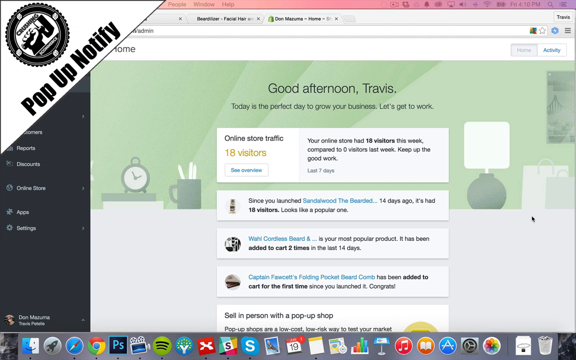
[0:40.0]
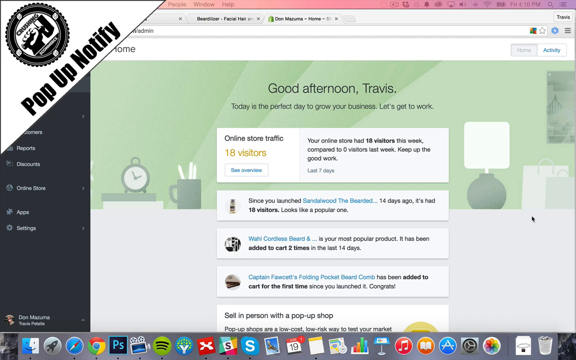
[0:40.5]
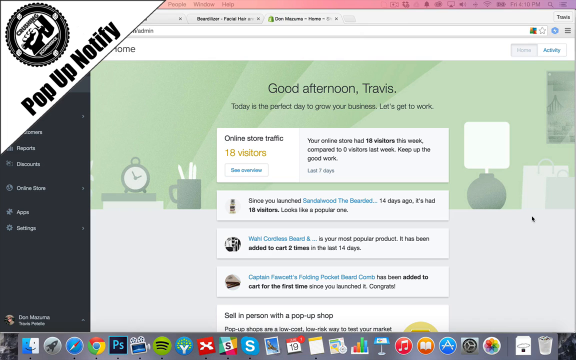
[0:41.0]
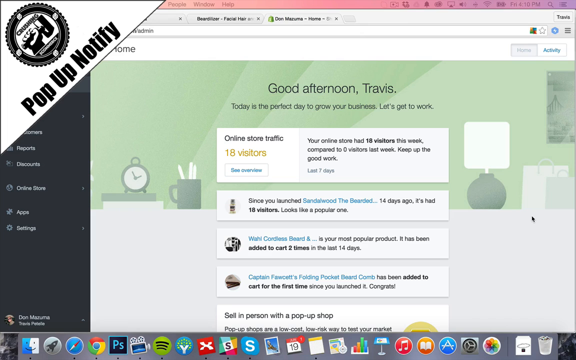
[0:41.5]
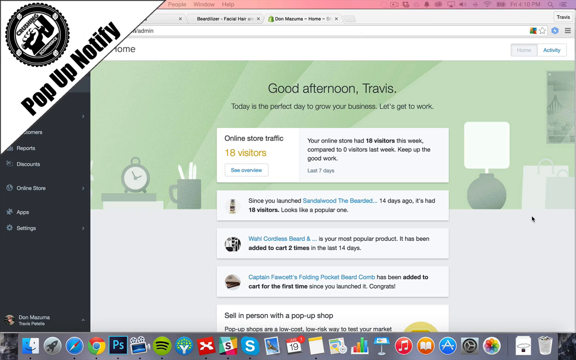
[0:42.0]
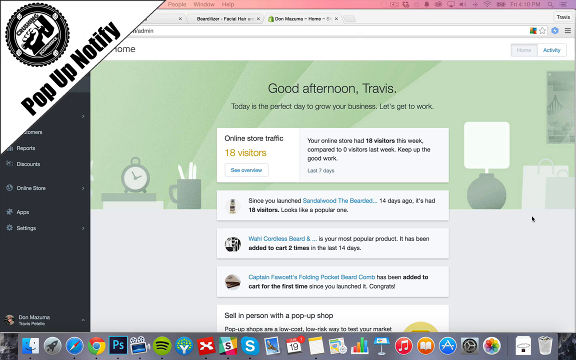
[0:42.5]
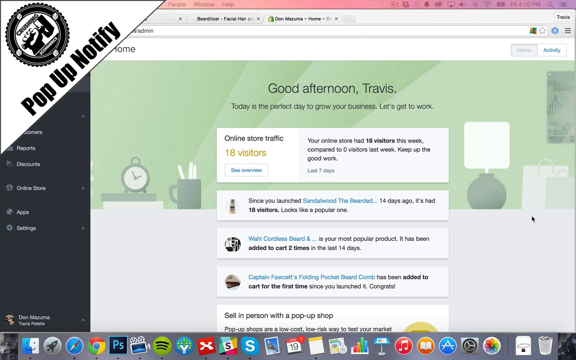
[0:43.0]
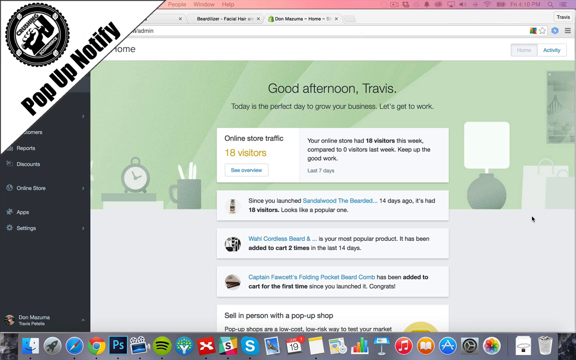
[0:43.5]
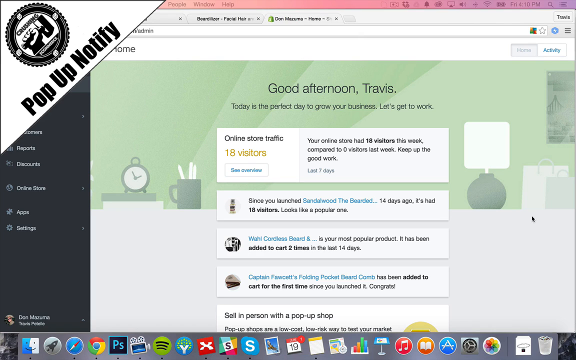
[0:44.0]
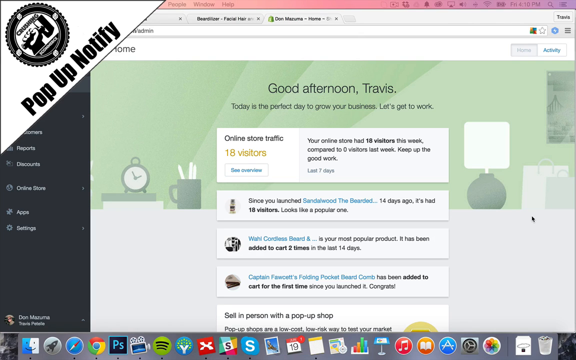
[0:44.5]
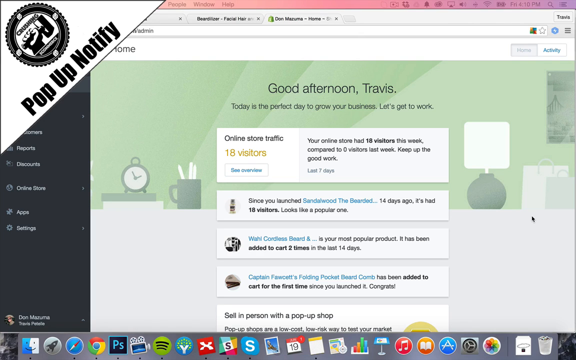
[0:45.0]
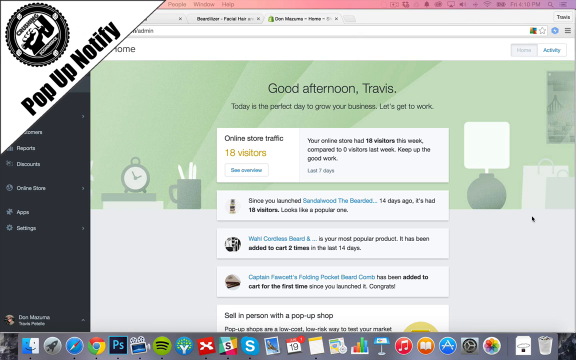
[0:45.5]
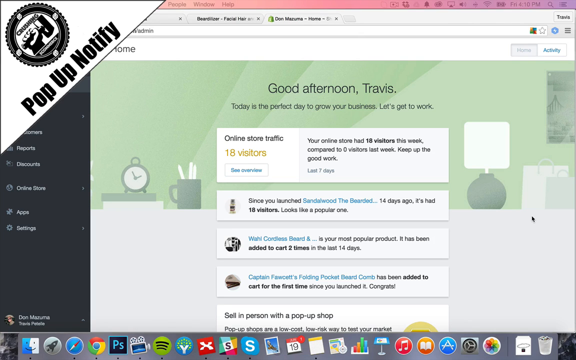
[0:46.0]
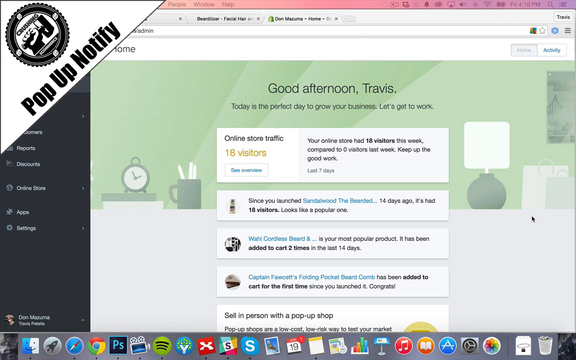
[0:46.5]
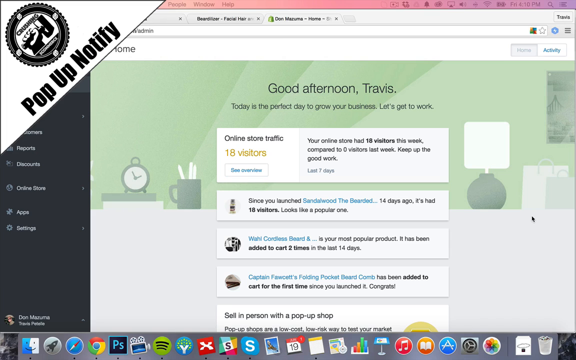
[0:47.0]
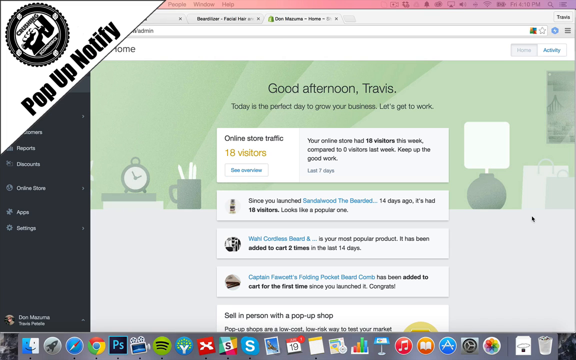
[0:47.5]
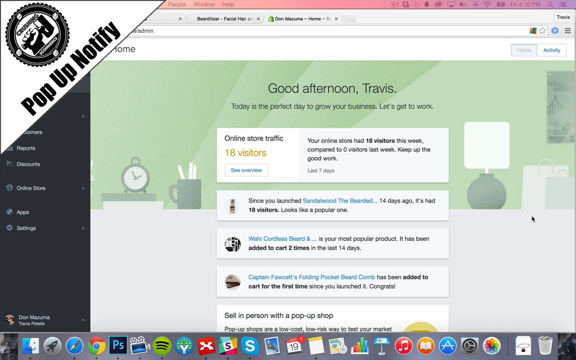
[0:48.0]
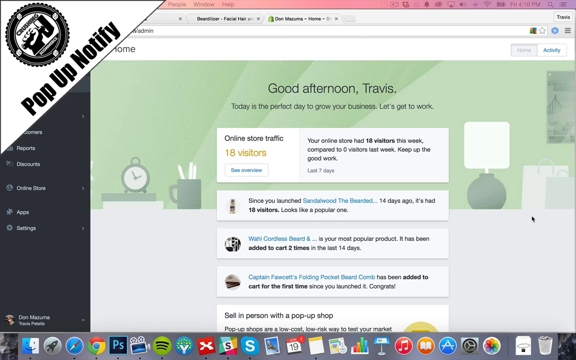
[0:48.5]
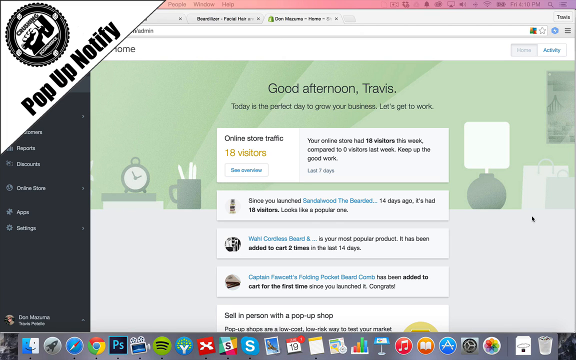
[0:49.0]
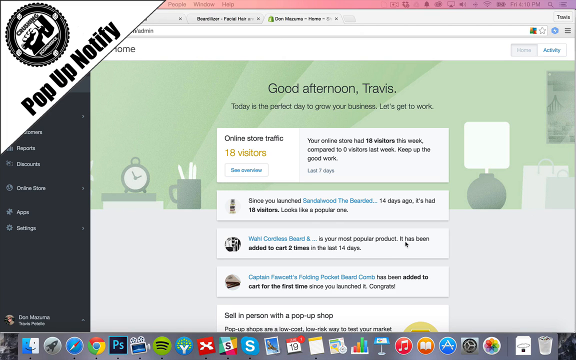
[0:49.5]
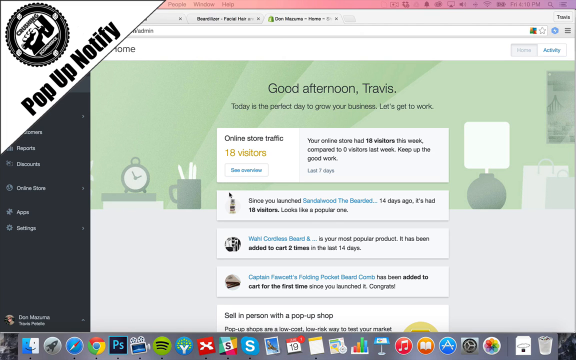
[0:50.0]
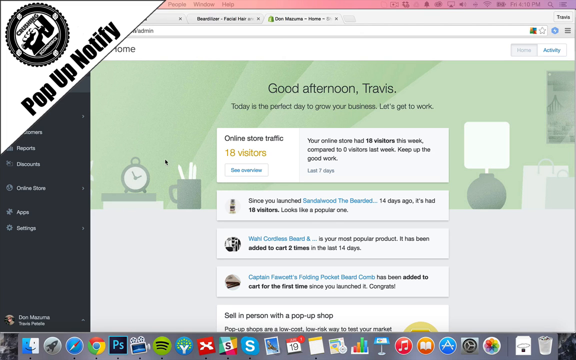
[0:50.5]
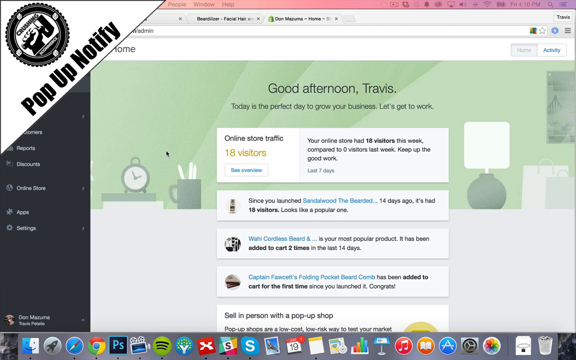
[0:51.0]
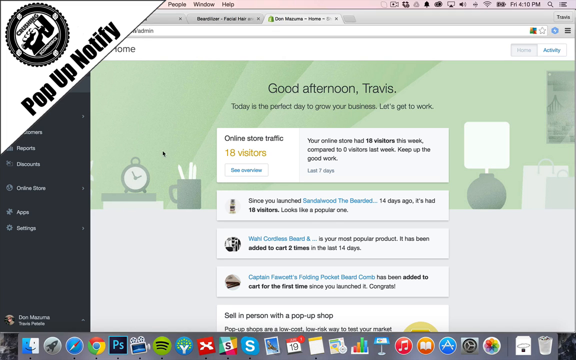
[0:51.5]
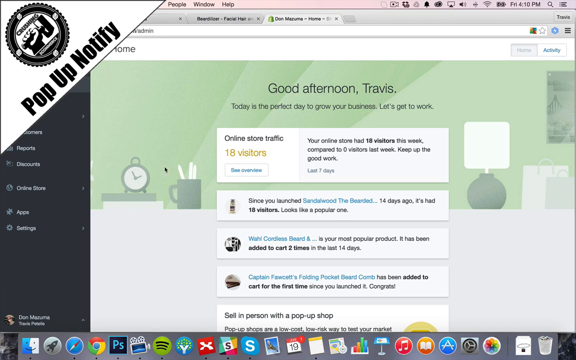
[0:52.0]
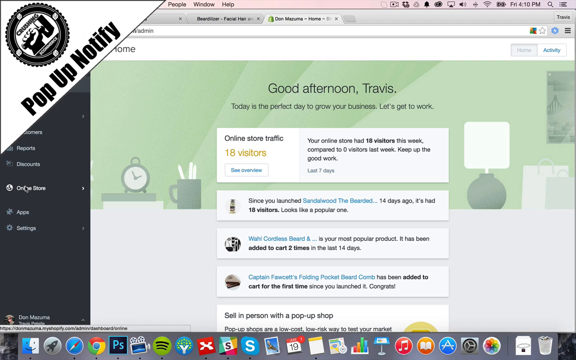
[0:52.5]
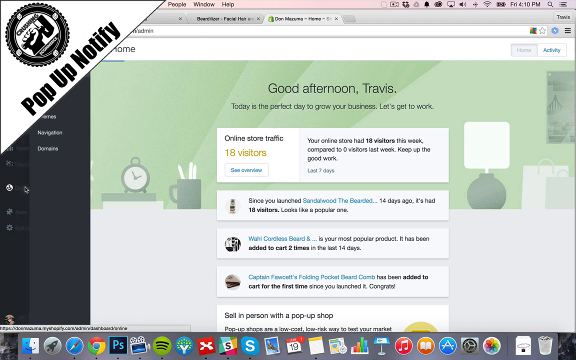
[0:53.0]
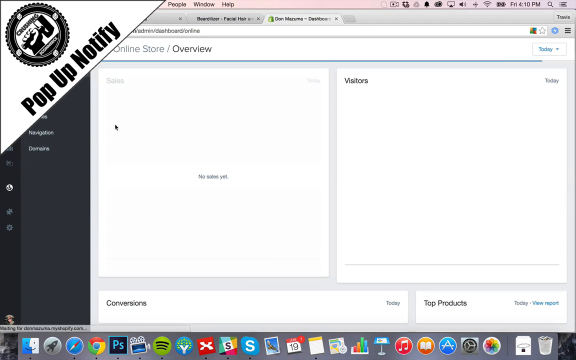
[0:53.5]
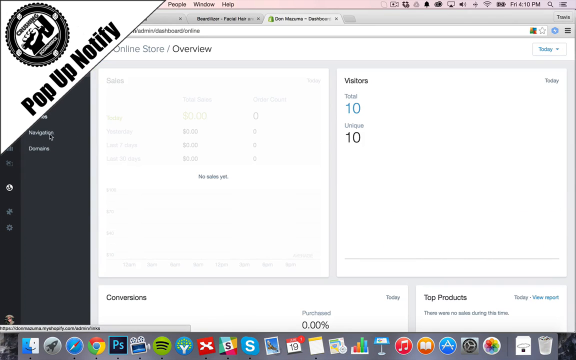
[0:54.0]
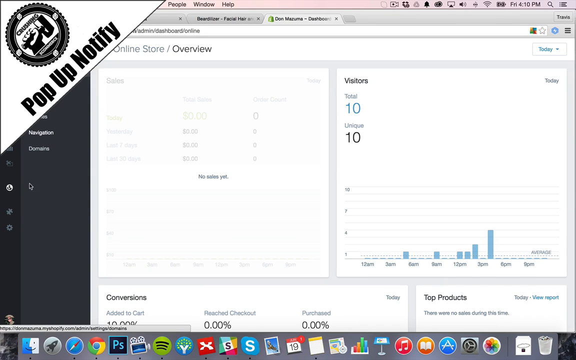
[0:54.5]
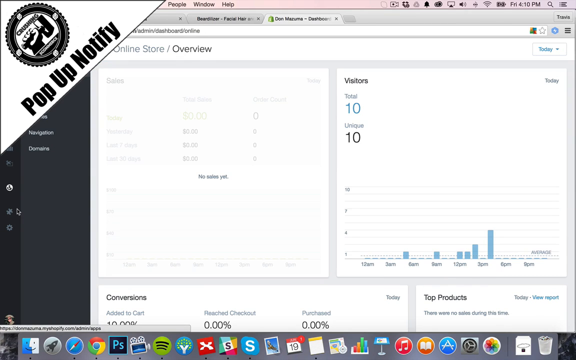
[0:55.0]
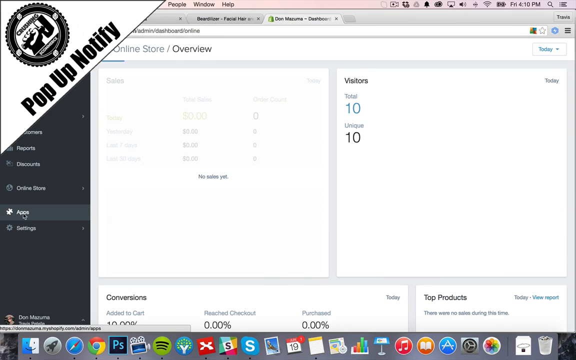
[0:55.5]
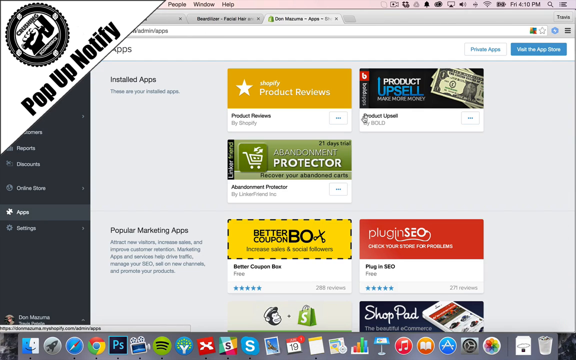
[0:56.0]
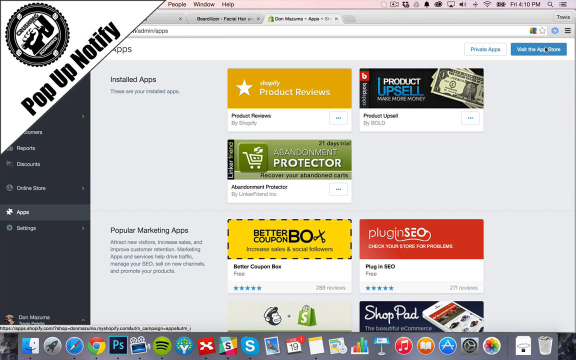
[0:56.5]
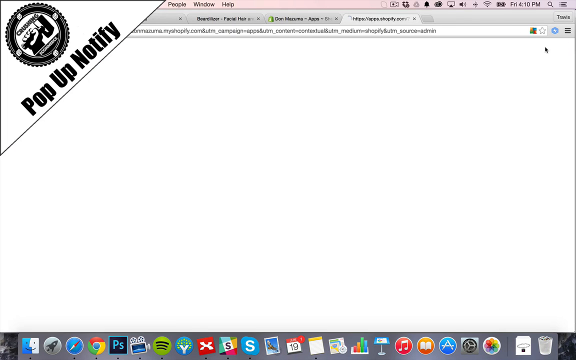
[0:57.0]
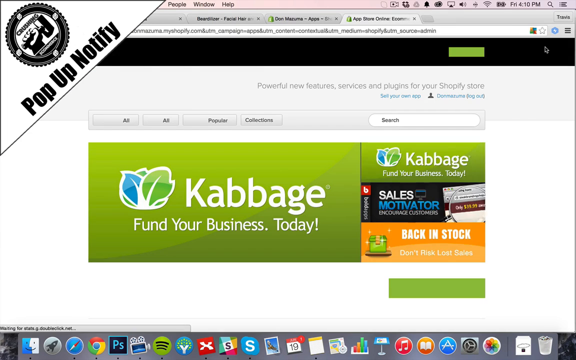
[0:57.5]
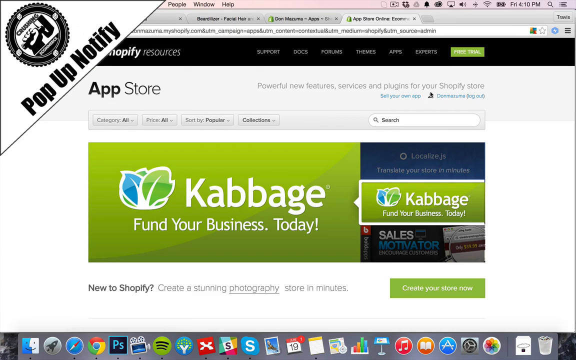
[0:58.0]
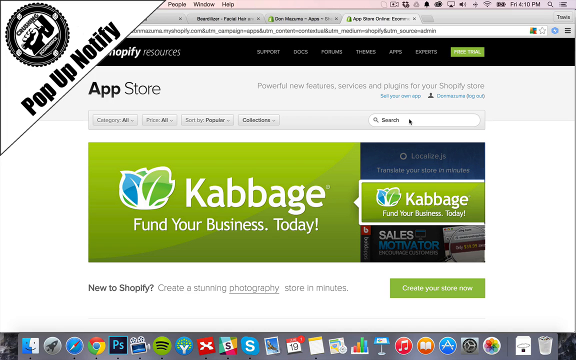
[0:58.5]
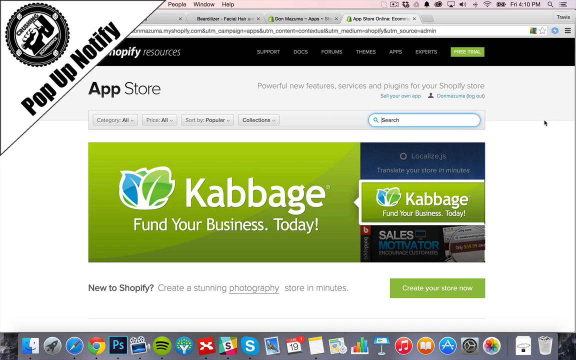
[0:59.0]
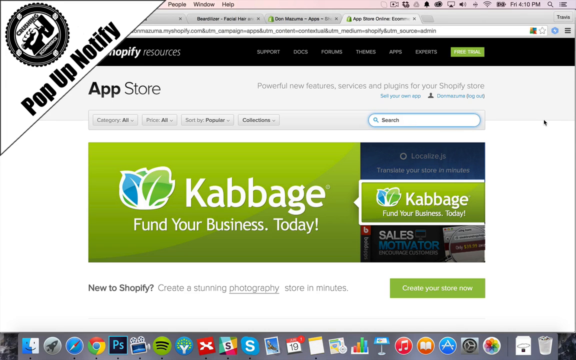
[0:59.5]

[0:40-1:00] On the left-hand side is "Pop up notify" along with the logo from the opening reading "Crushin" and "e-commerce". The page still reads "Good afternoon, Travis. Today is the perfect day to grow your business. Let's get to work," with the online store traffic section noting 18 visitors this week compared to zero last week, "keep up the good work", and that since sandalwood was launched 14 days ago it has had 18 visitors and "looks like a popular one". The mouse then clicks one of the links on the left side, going from the online store to apps and the app store. Briefly, the selected app in the app store is Kabbage, spelled K-A-B-B-A-G-E.